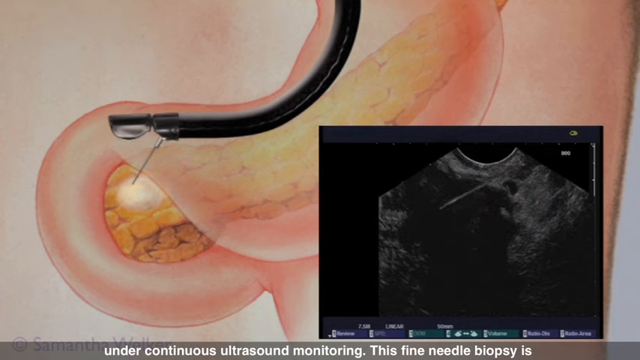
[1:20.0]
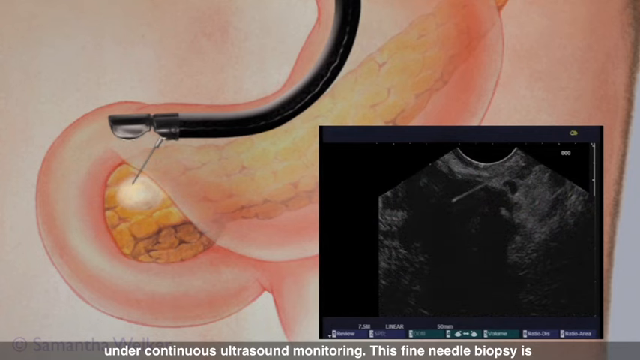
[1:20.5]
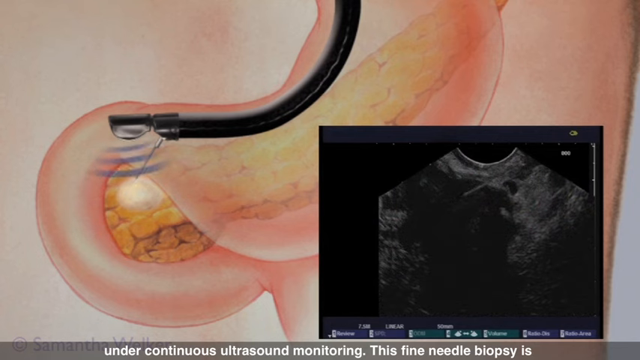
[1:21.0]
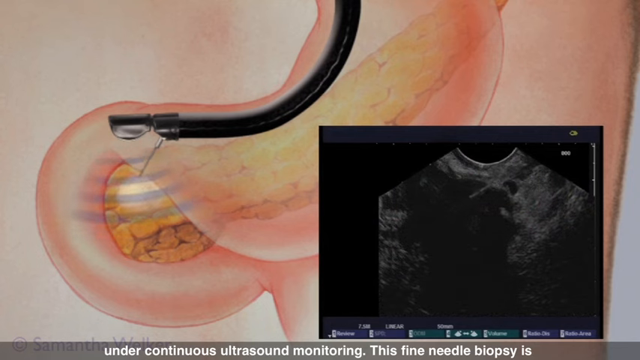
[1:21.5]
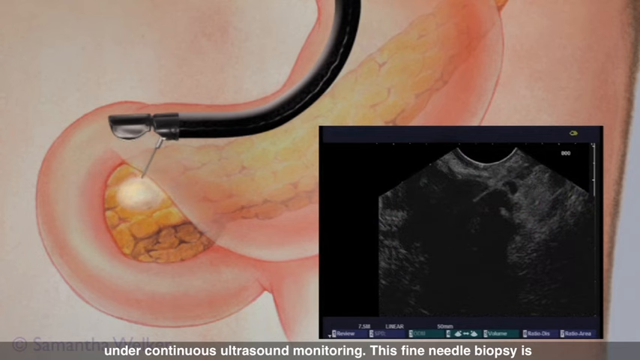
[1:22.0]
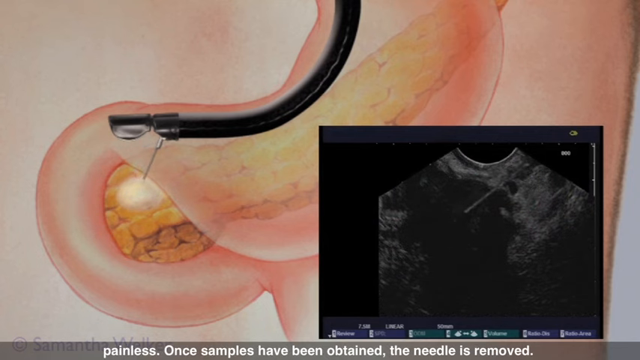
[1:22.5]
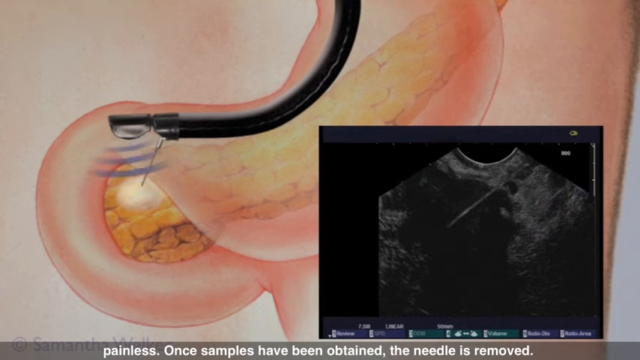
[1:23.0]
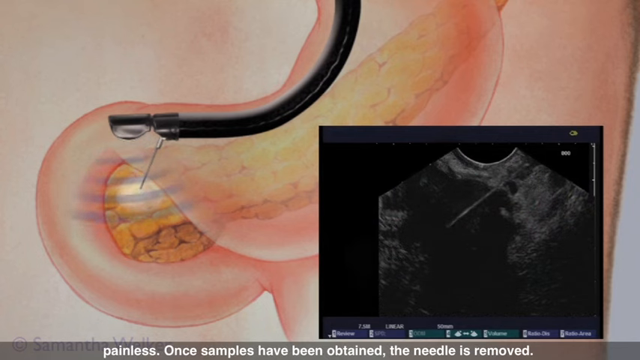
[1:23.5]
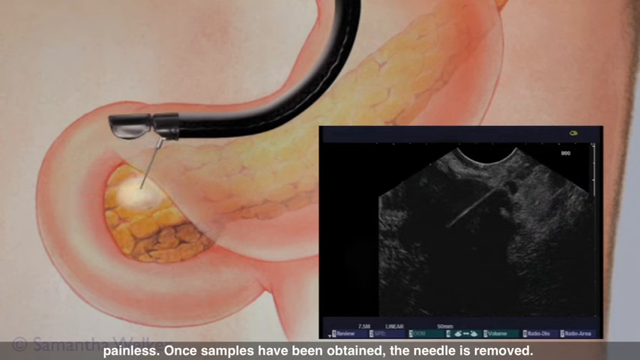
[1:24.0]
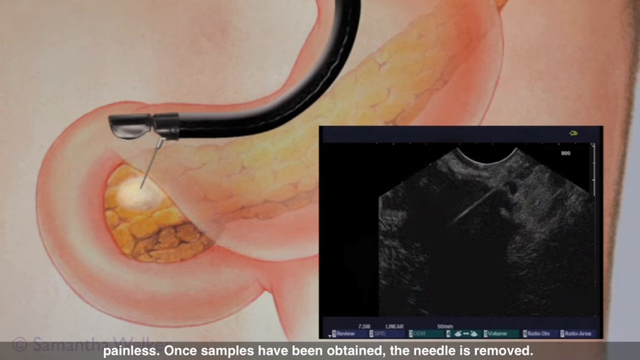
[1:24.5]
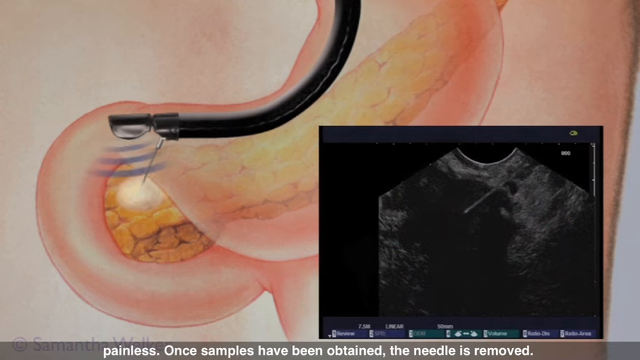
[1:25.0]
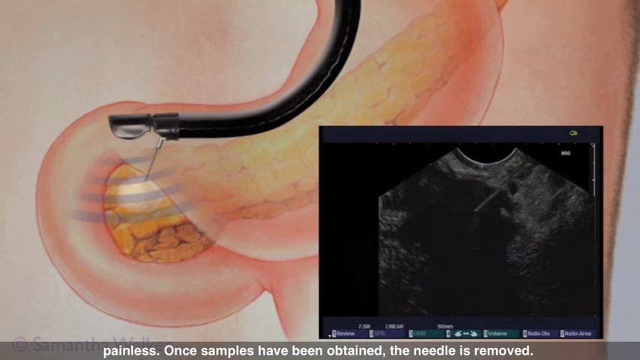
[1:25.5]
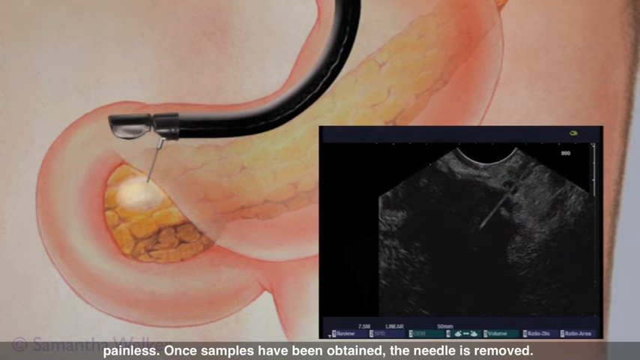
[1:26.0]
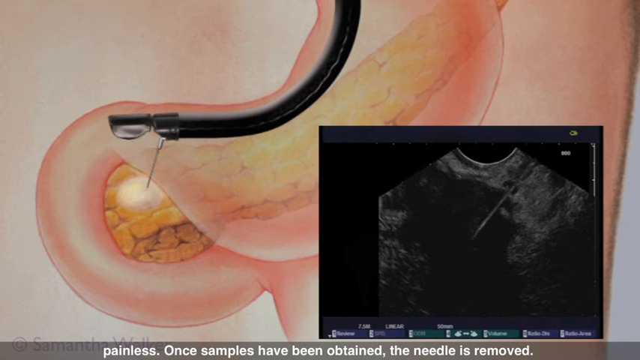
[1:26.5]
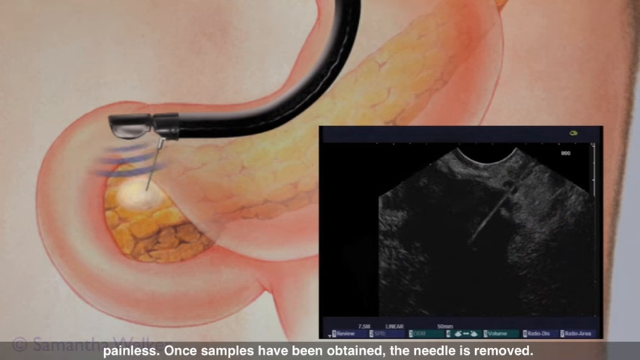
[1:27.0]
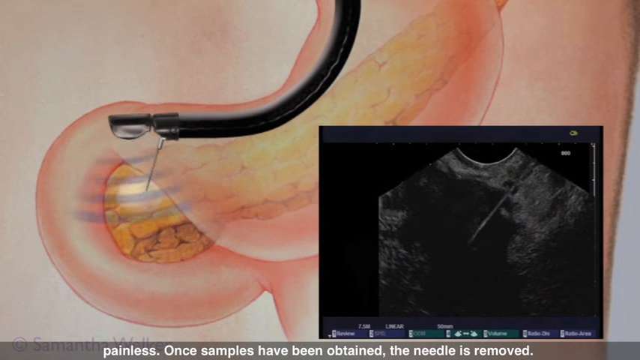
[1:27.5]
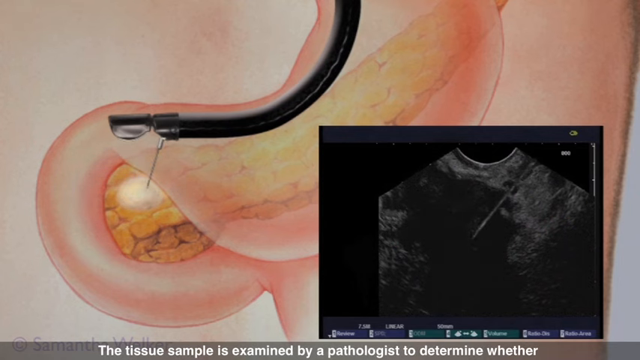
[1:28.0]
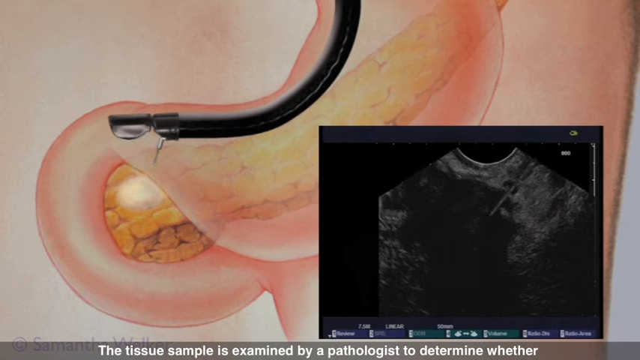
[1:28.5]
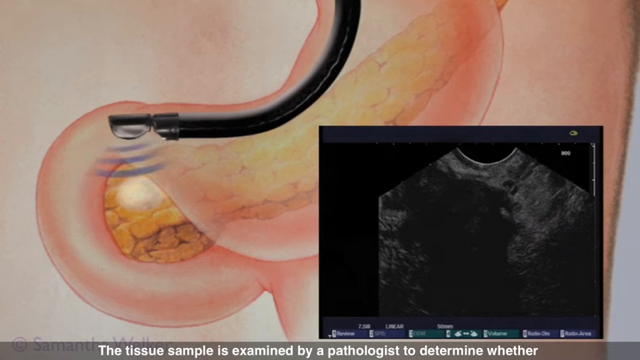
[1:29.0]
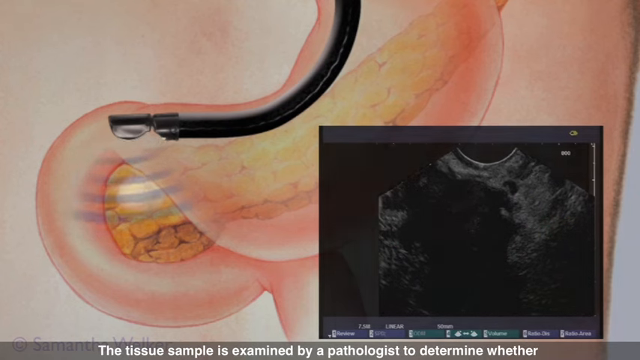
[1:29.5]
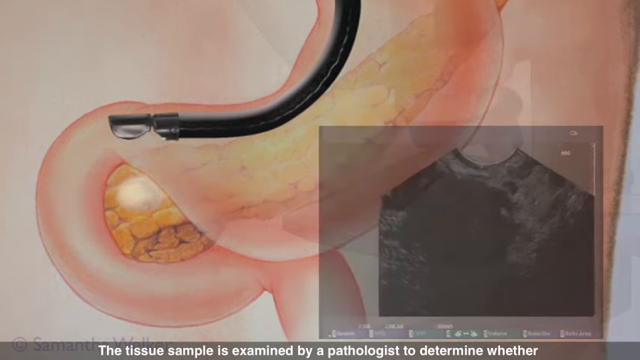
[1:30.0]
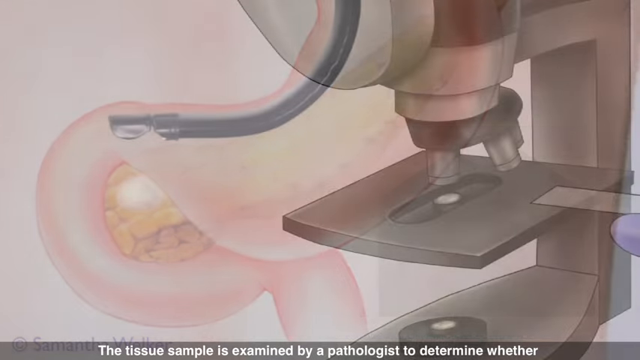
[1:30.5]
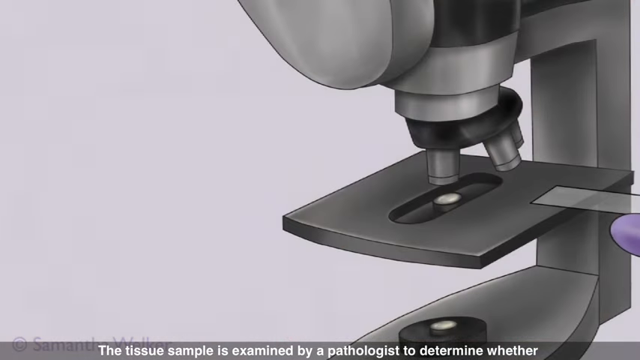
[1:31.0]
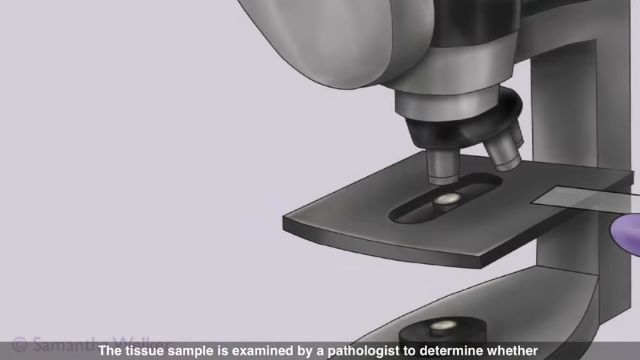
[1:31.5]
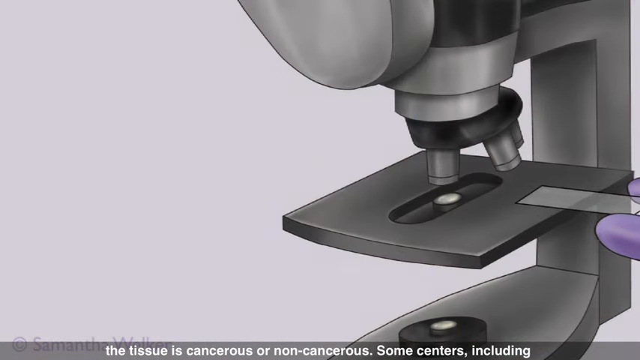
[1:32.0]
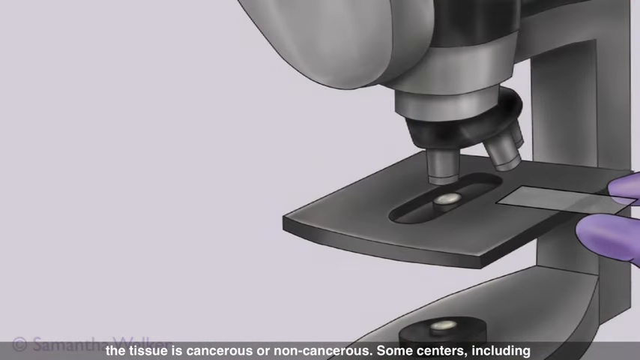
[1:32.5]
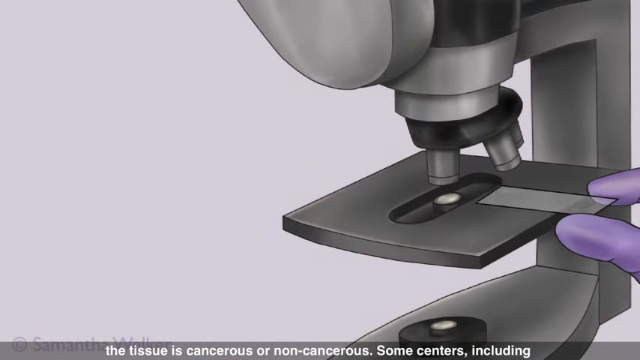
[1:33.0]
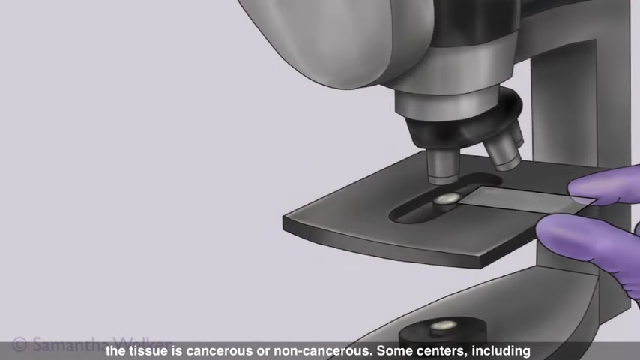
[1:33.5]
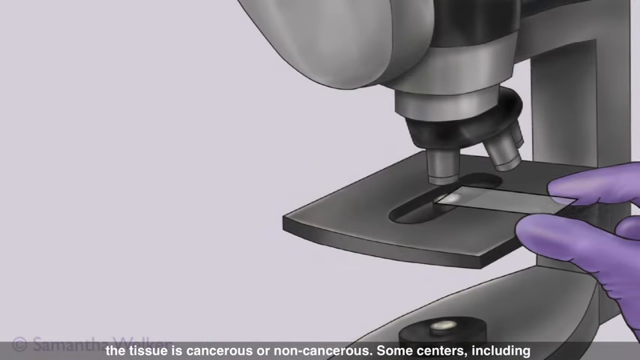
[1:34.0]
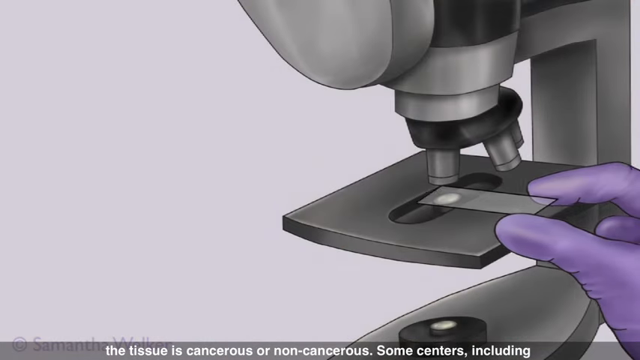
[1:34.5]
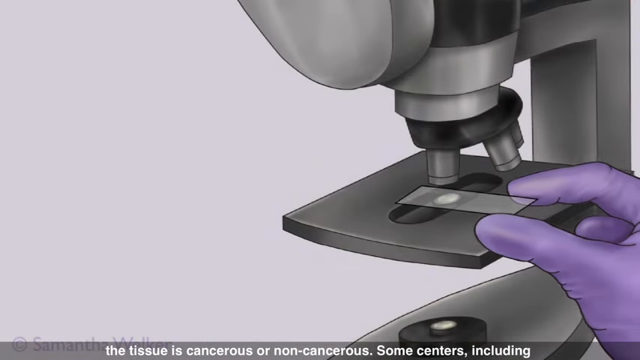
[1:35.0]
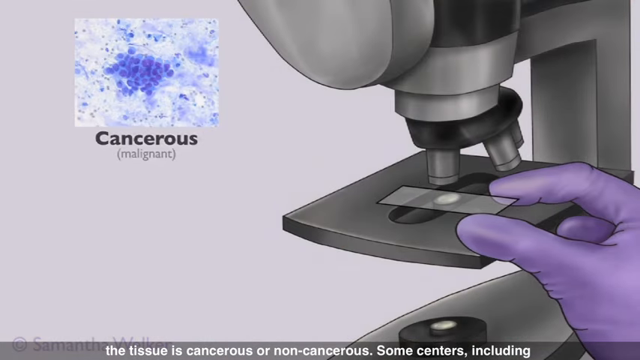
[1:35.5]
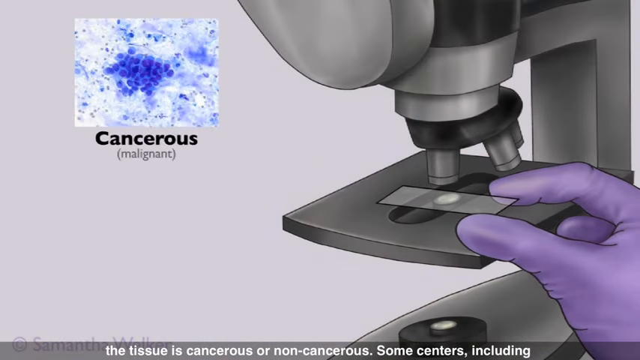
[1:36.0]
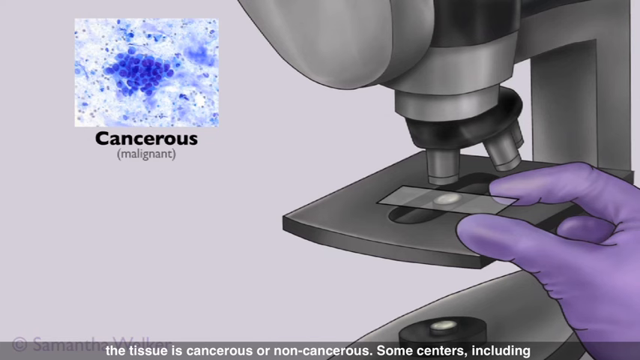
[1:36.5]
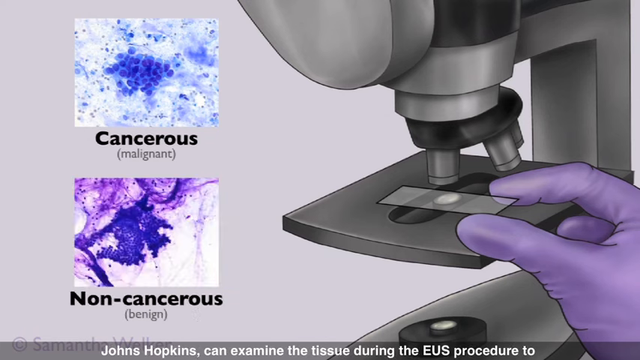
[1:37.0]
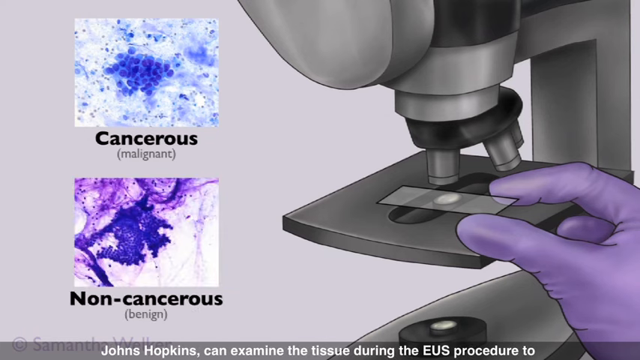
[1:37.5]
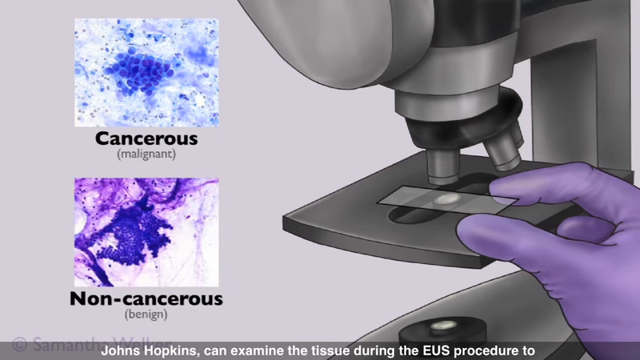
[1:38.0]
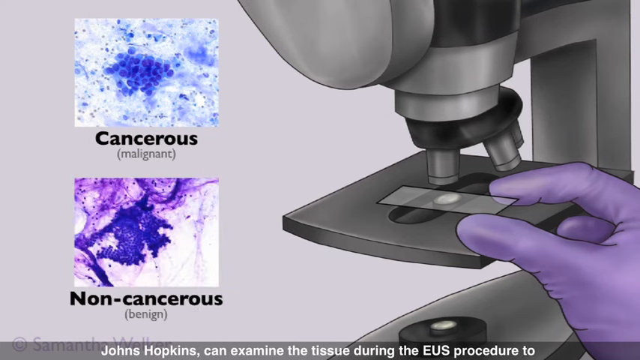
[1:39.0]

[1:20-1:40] The ultrasound probe is still inside the man's digestive tract, and now a needle used for the fine needle aspiration procedure is also visible. The needle is connected to the bottom of the probe section, extends away from it, and is inserted into the pancreas. Toward the lower right side of the frame there appears to be a screen, apparently one a technician would use for guidance during the procedure. Blue lines representing the ultrasound waves continue to move away from the tip of the probe. Next, a microscope appears. Fingertips apparently covered in purple nitrile gloves insert a rectangular glass microscope slide into the microscope. Light shines down on the slide, shown as a round circle. Next, a screen with a black background and grey areas appears in the lower right corner, apparently helping guide the scope to the correct position in the digestive tract for imaging.